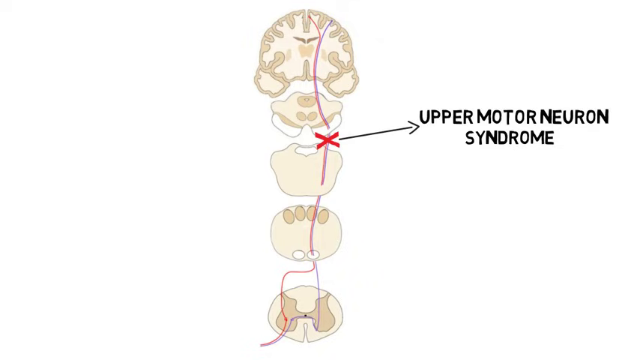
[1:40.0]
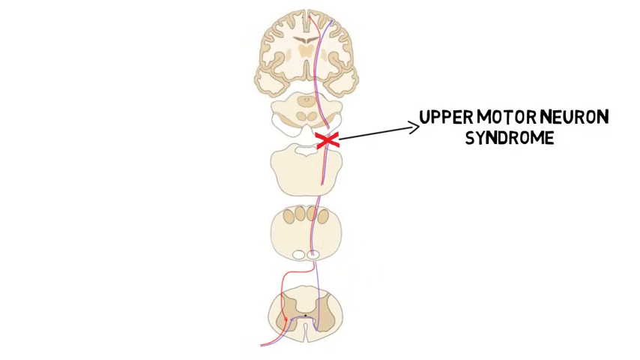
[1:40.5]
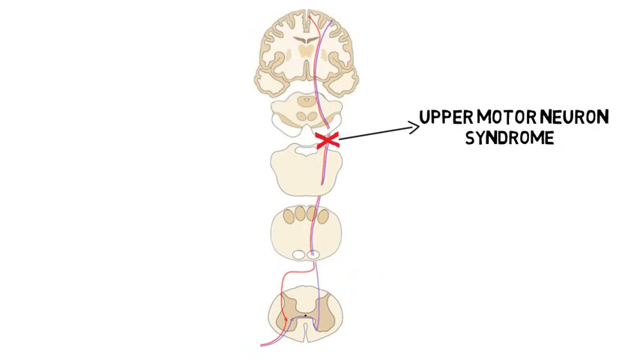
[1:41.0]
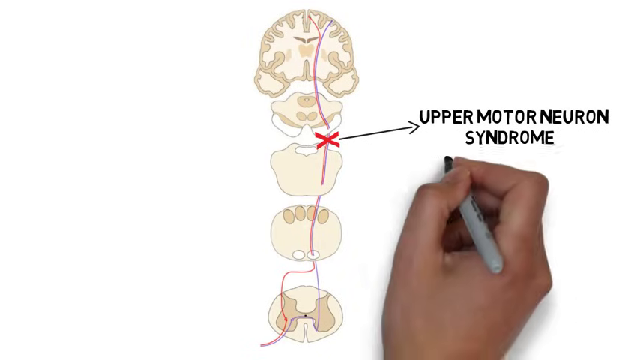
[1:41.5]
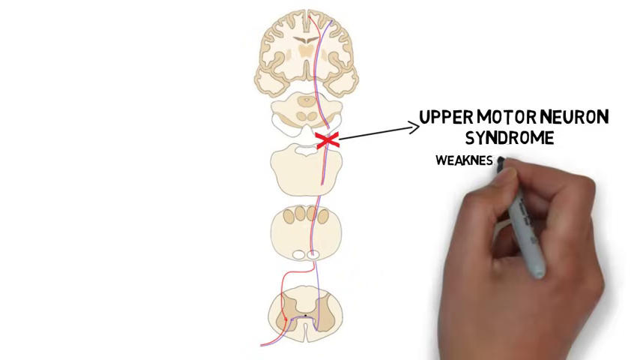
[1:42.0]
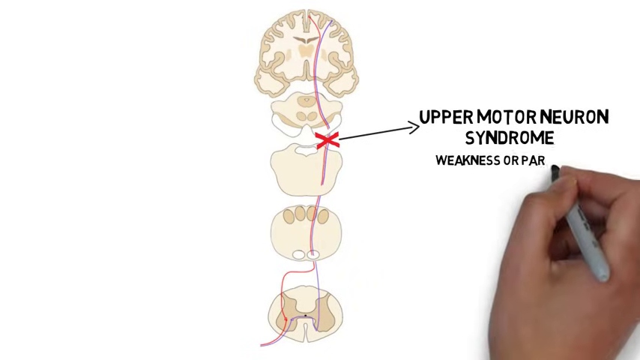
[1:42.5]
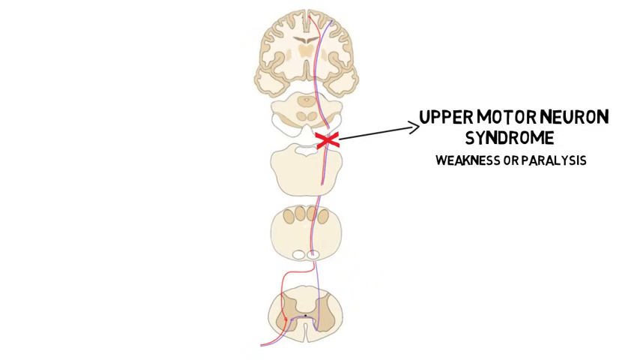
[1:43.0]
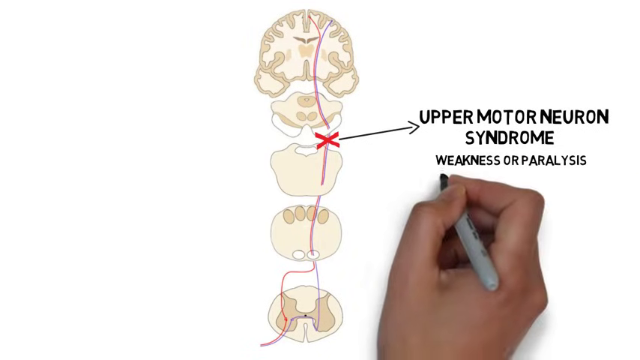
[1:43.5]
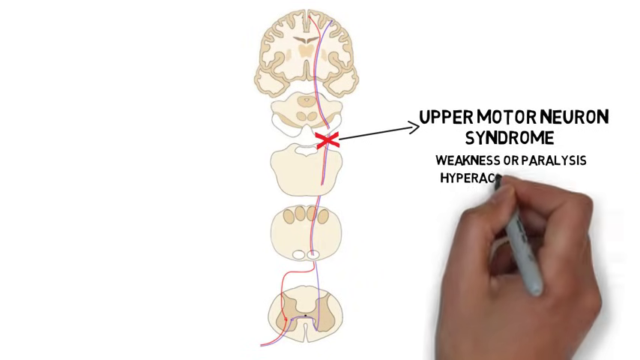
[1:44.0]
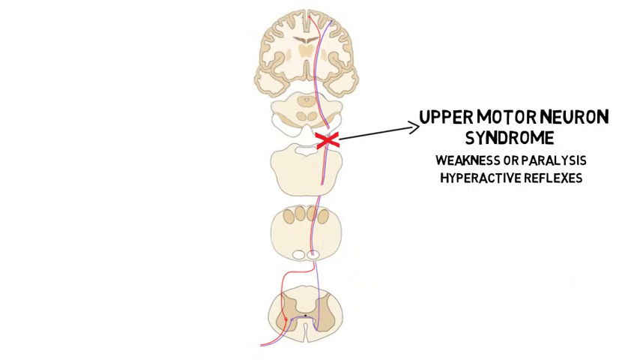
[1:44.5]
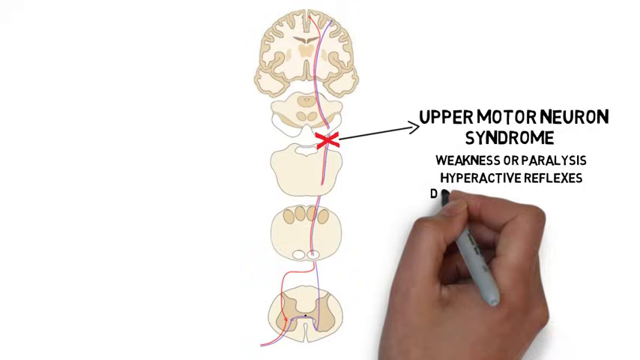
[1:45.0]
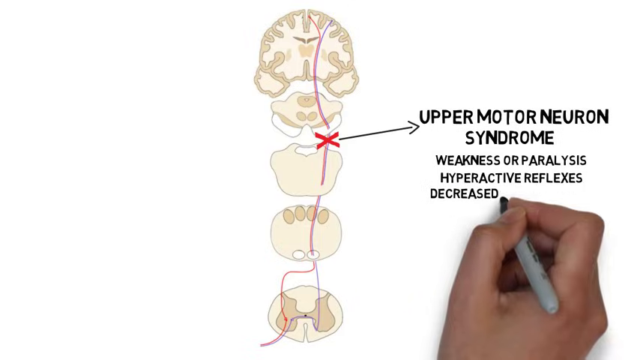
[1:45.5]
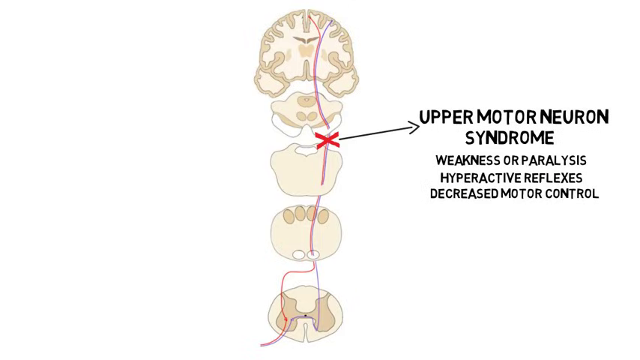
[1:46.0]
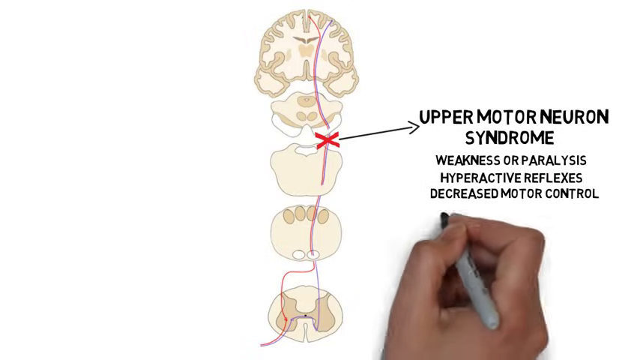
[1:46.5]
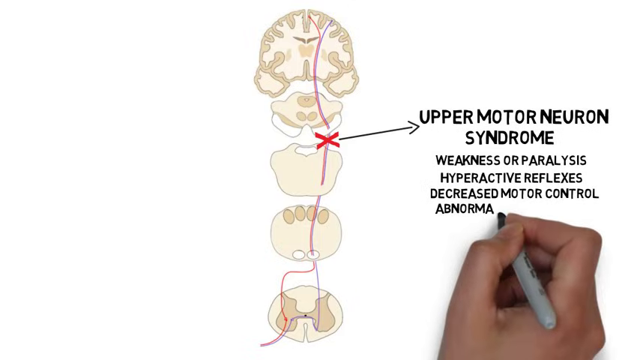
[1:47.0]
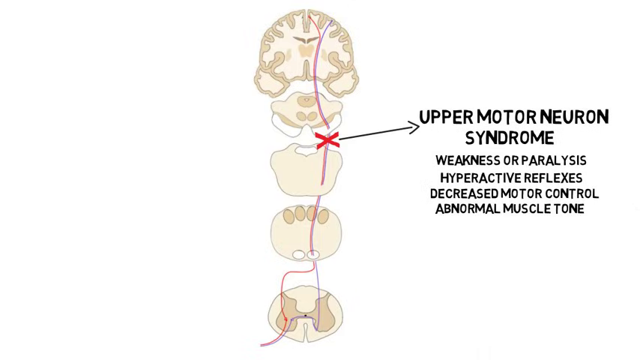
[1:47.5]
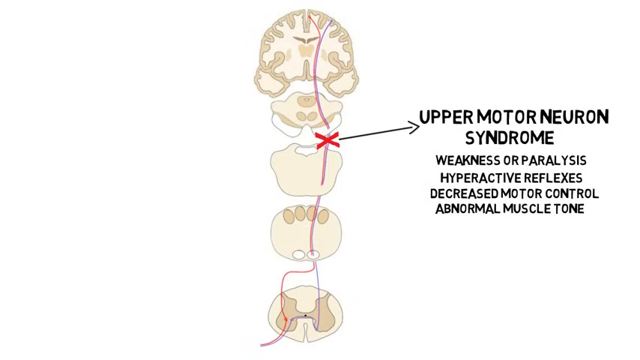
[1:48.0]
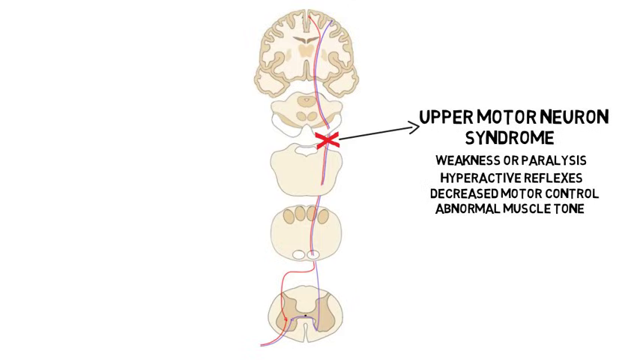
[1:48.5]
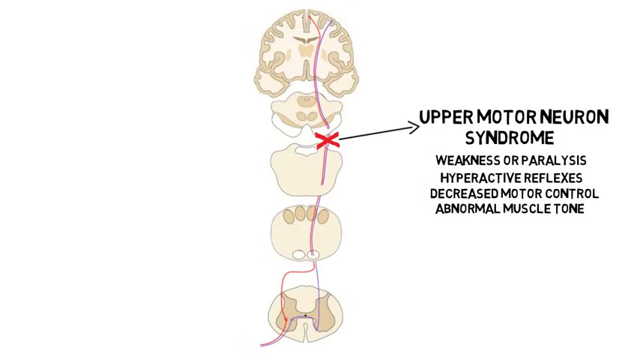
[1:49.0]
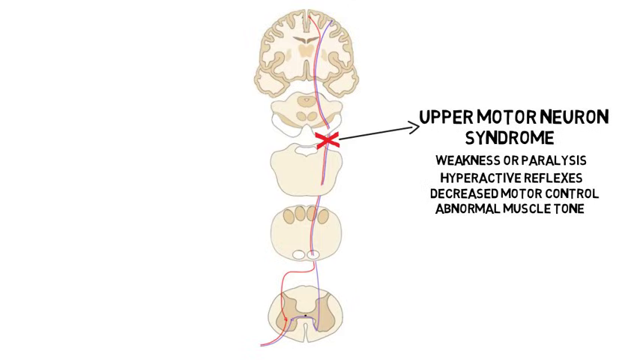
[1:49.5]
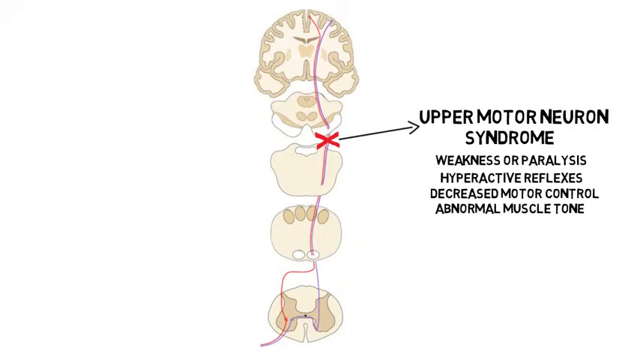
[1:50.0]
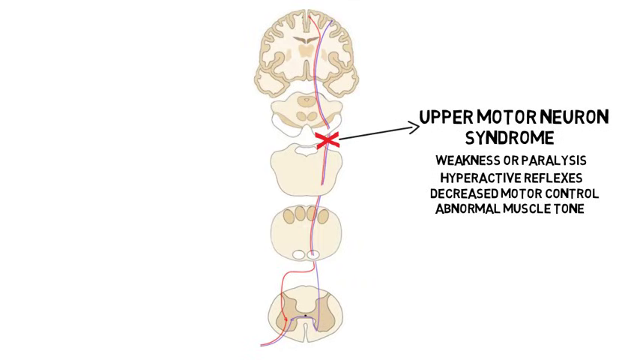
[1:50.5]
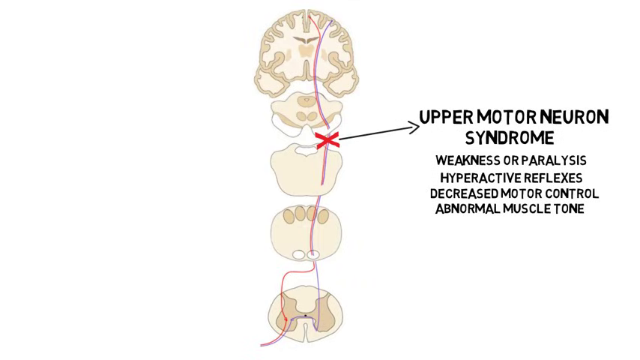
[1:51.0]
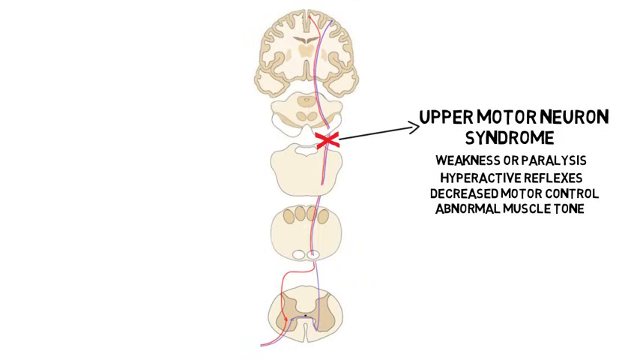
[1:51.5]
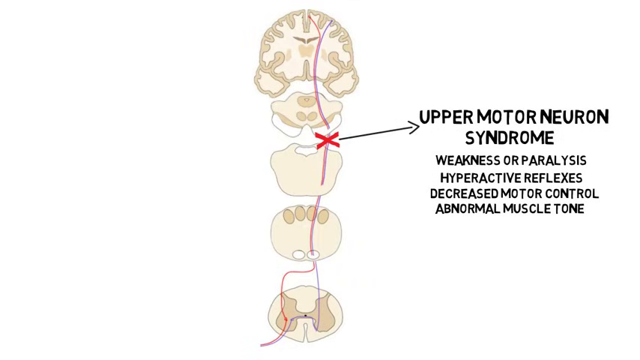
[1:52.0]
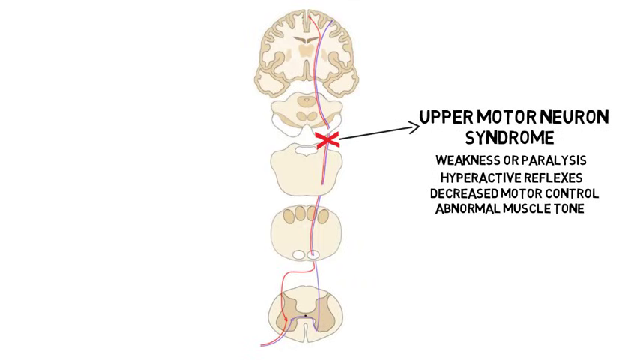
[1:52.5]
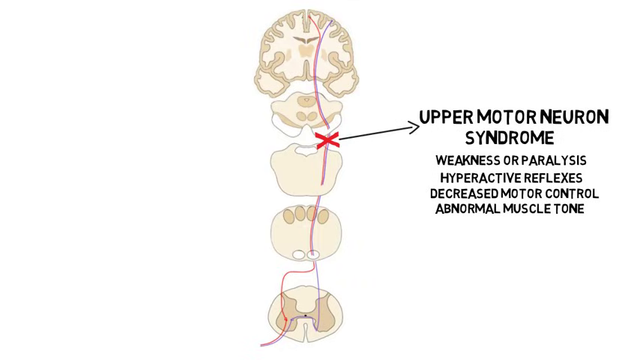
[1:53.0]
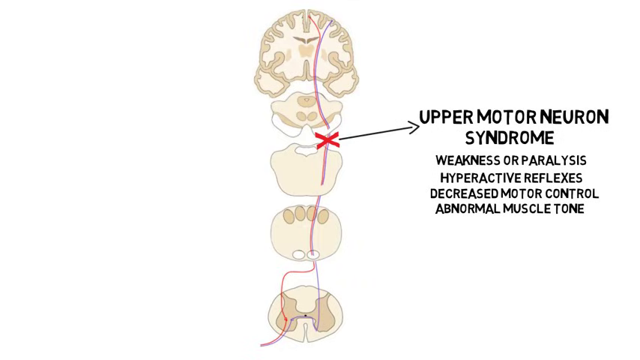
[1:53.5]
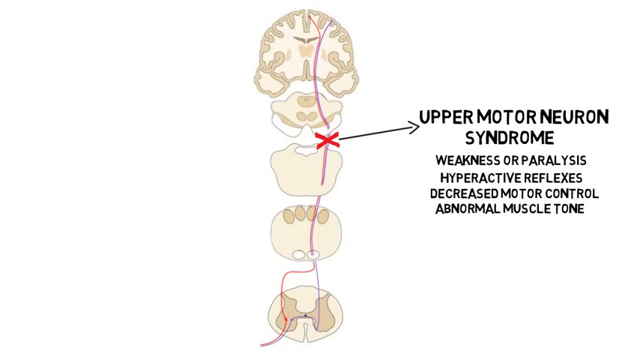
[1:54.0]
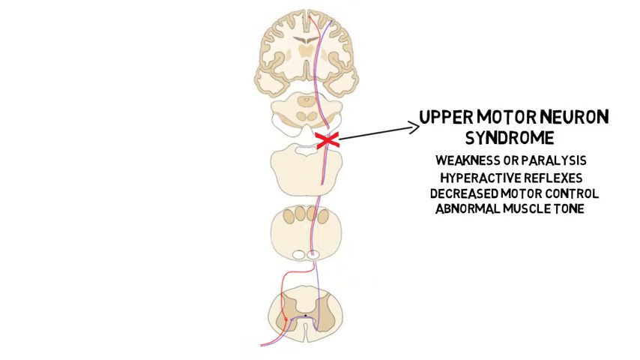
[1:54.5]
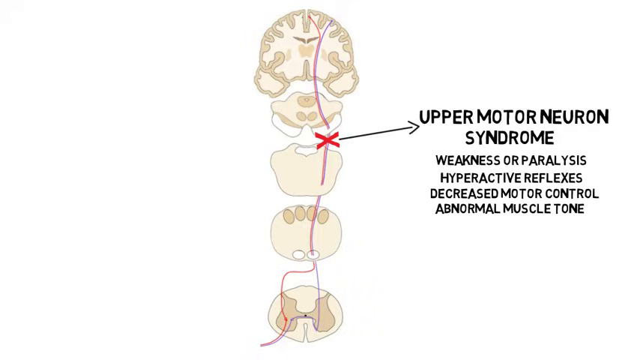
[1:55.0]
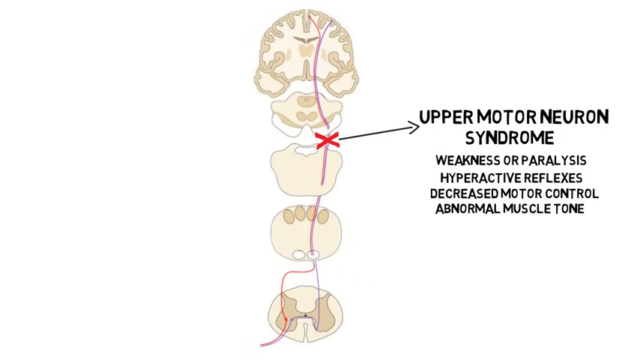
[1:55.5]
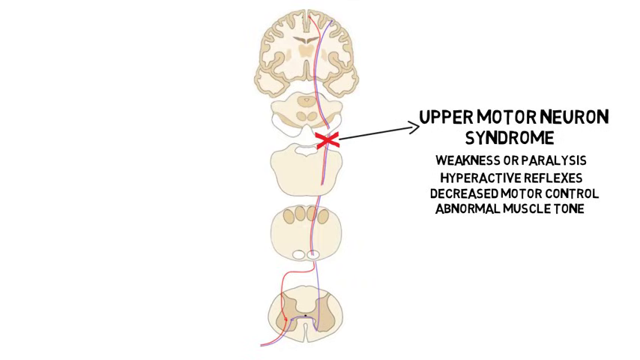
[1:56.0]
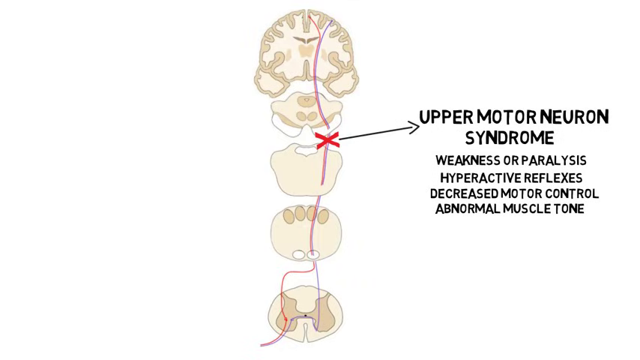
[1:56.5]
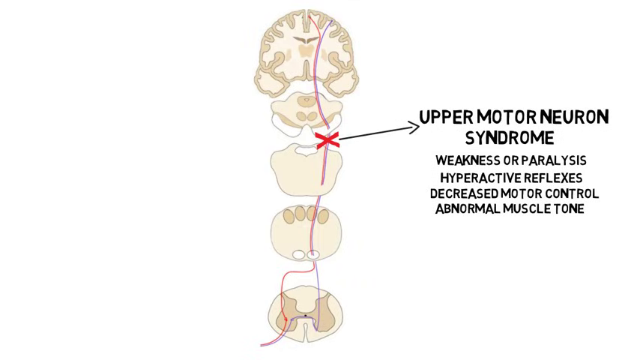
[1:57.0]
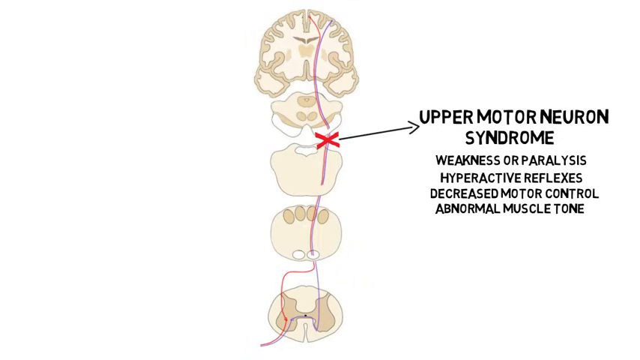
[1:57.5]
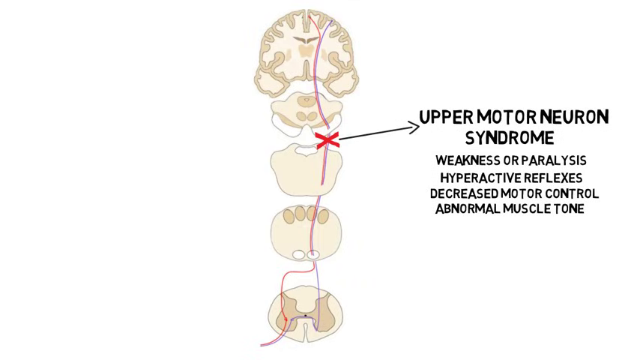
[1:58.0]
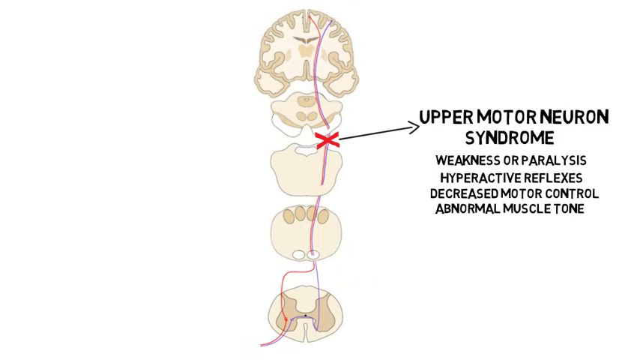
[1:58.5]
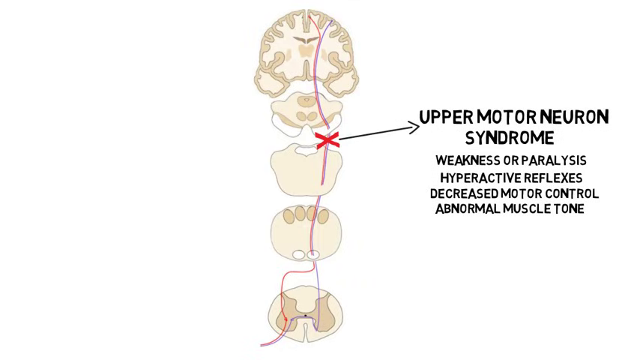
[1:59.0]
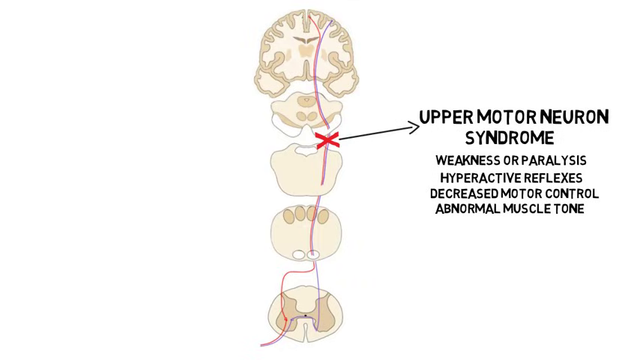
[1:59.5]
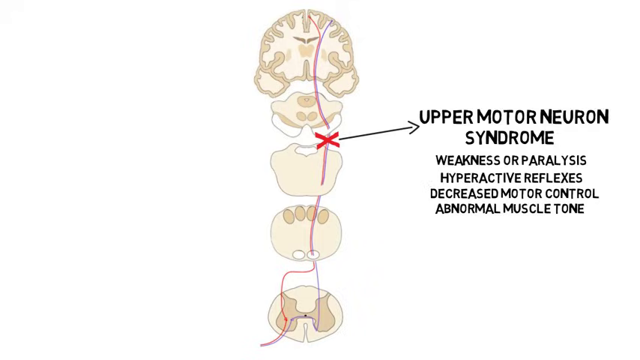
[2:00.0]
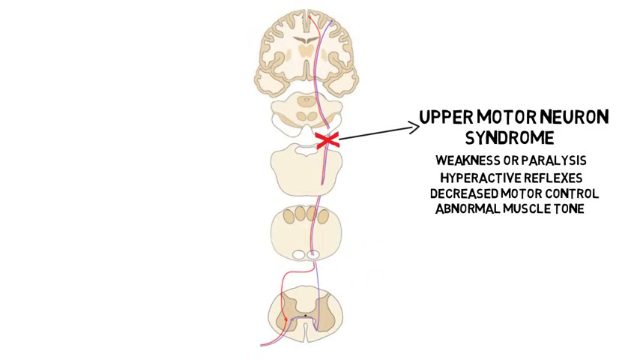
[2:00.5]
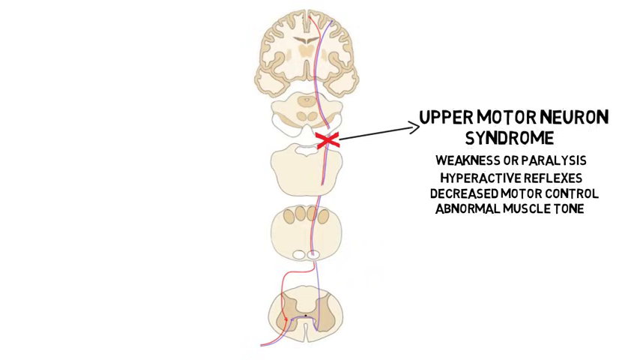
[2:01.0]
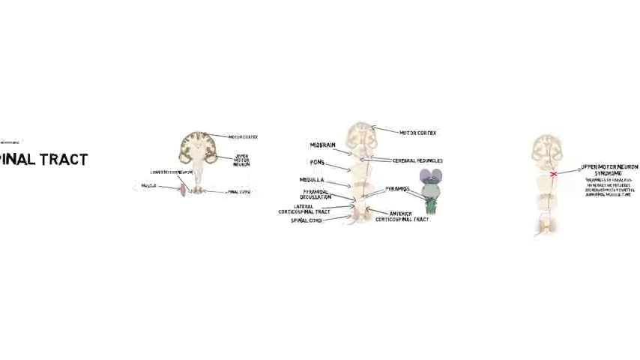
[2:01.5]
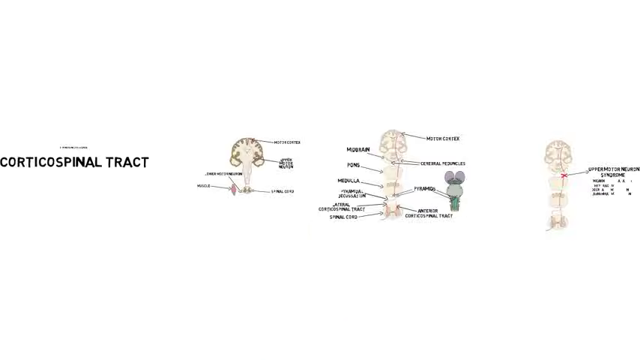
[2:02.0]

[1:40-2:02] The hand comes up with the sharpie and writes four points underneath "upper motor neuron syndrome", in smaller text than the label above: "weakness or paralysis", "hyperactive reflexes", "decreased motor control" and "abnormal muscle tone", each on its own row. After writing each one, the hand disappears for a second before coming back to write the next. When the last is done, the hand moves off the screen, and the labeled diagram stays on screen. At the very end, the view zooms out to show all the diagrams seen in the video.